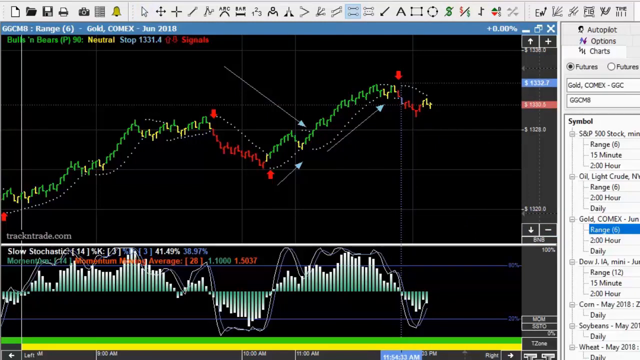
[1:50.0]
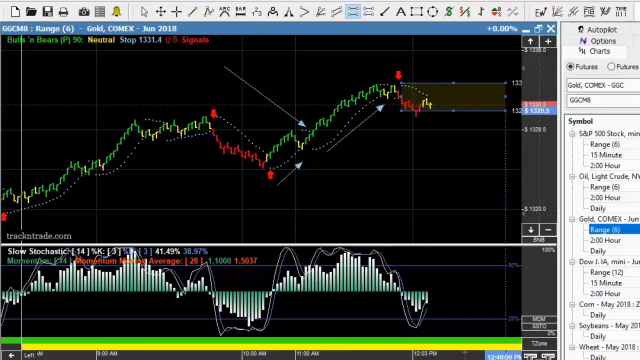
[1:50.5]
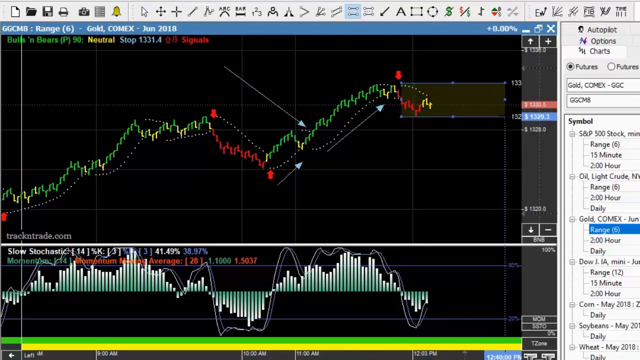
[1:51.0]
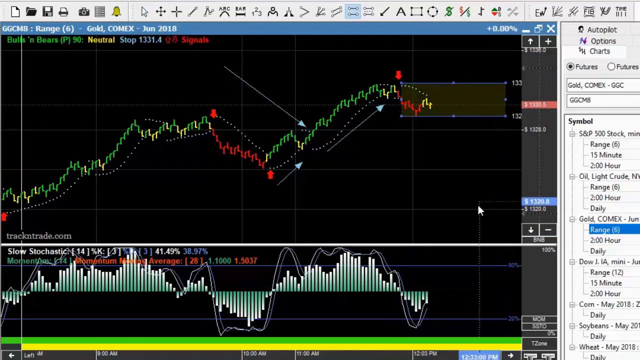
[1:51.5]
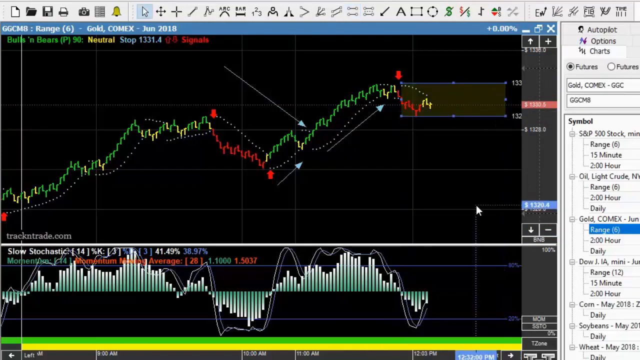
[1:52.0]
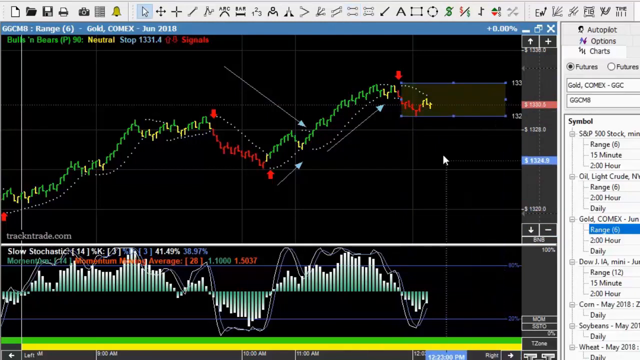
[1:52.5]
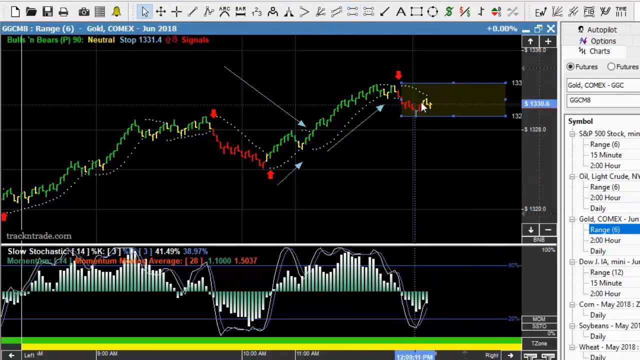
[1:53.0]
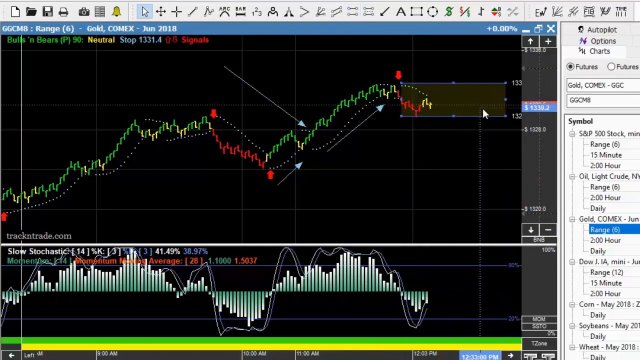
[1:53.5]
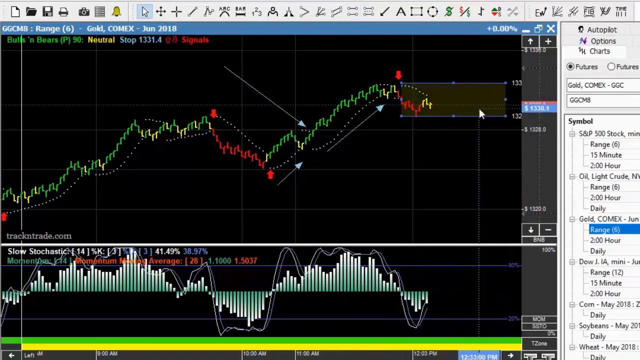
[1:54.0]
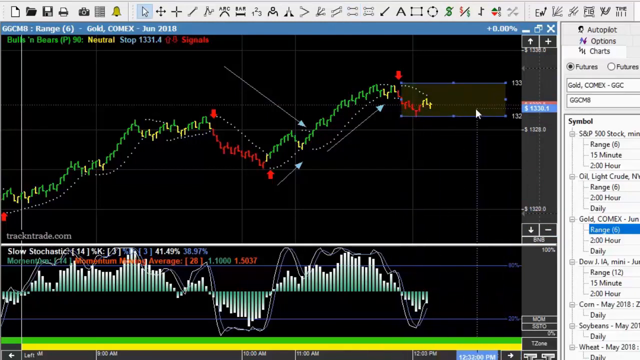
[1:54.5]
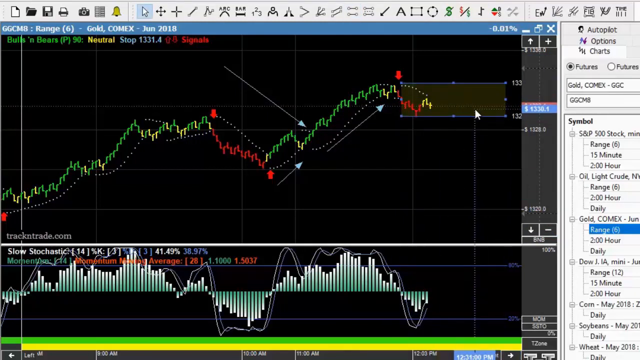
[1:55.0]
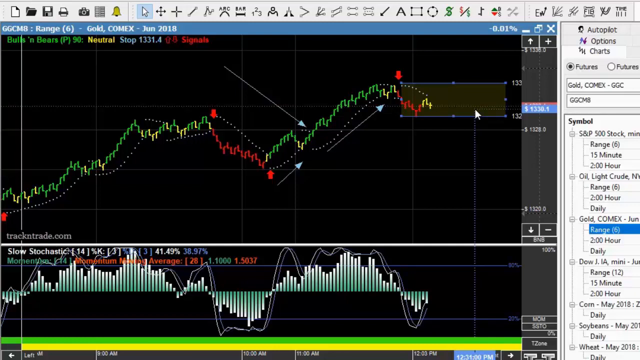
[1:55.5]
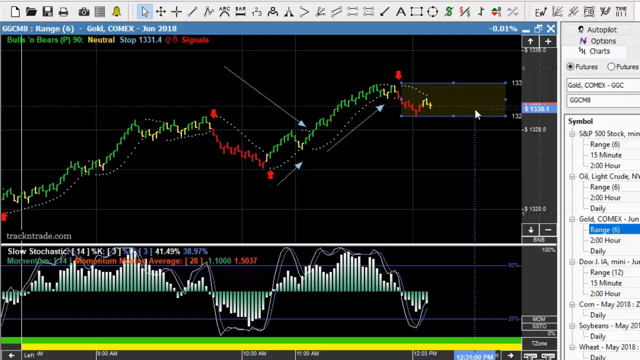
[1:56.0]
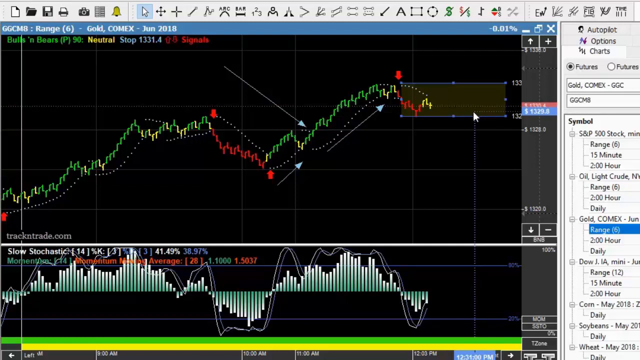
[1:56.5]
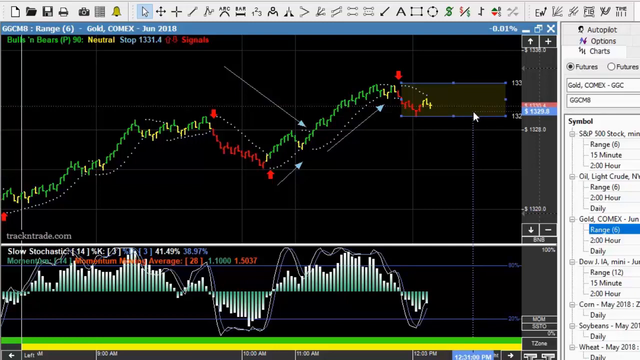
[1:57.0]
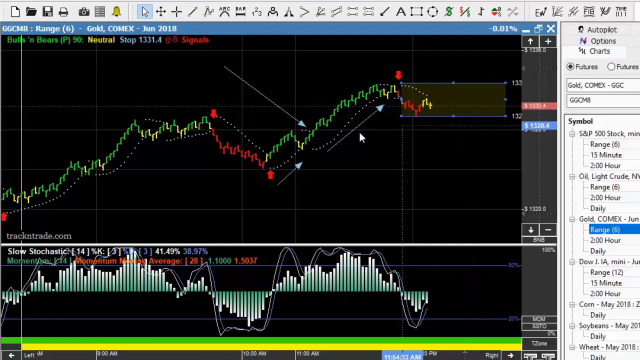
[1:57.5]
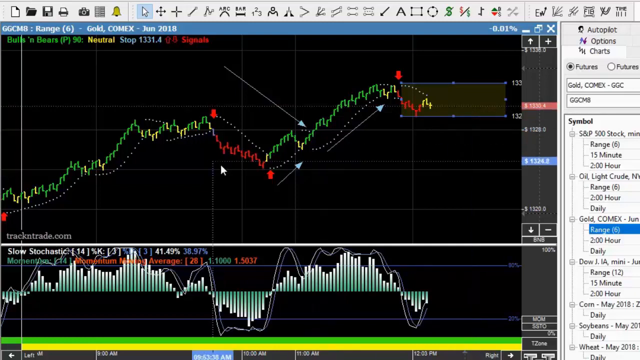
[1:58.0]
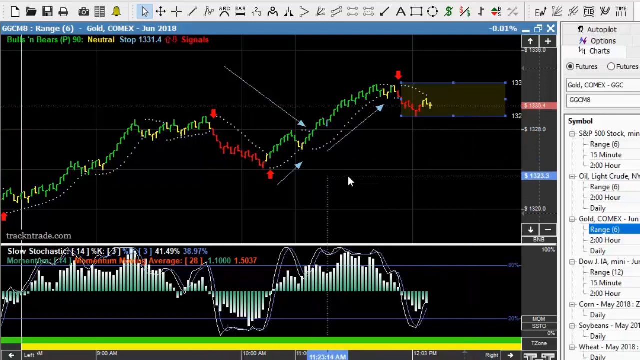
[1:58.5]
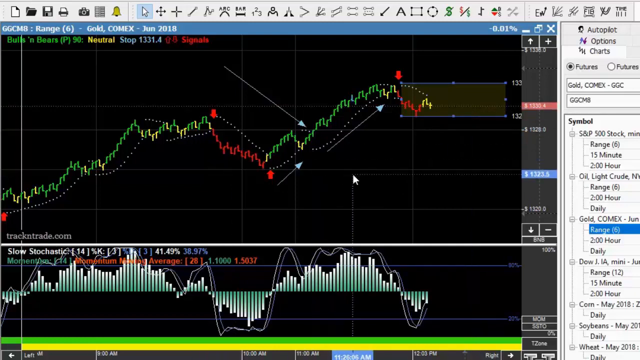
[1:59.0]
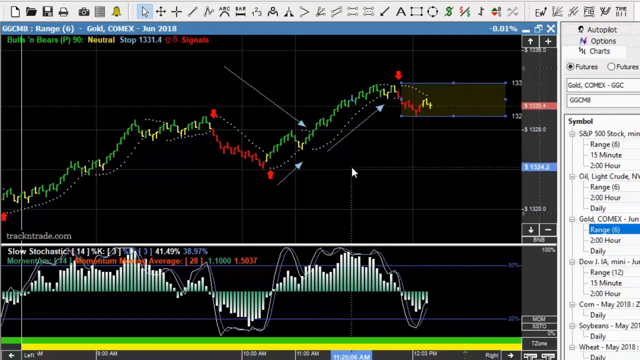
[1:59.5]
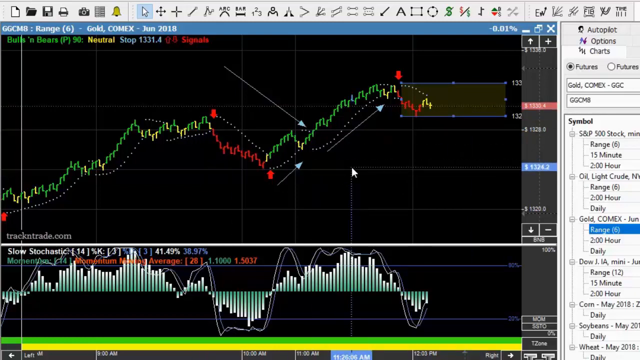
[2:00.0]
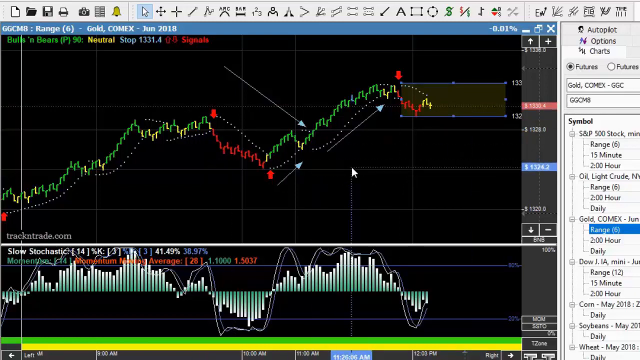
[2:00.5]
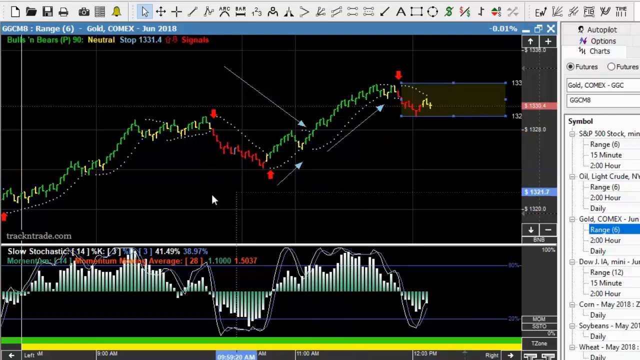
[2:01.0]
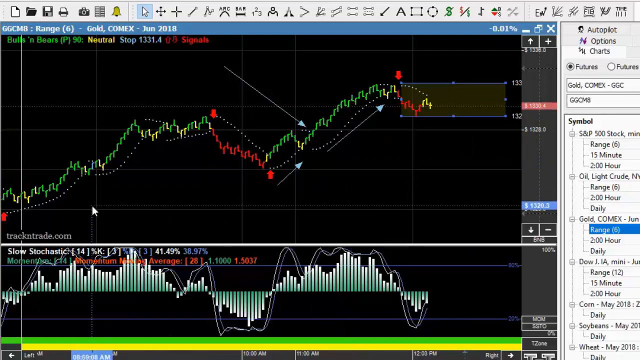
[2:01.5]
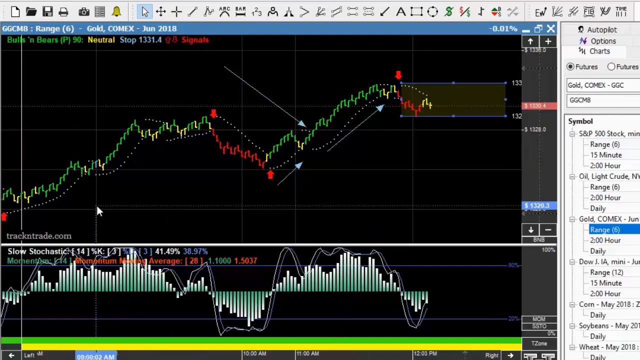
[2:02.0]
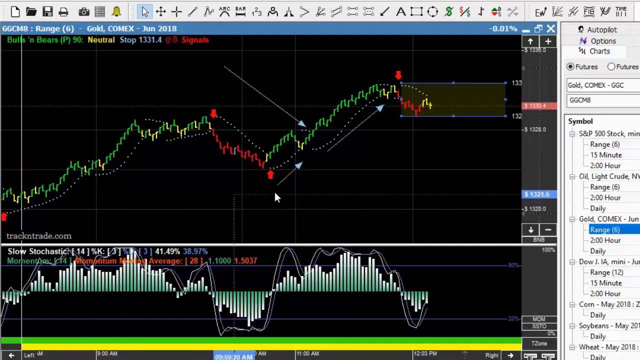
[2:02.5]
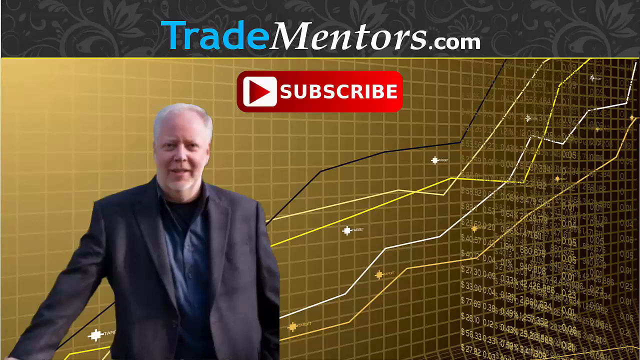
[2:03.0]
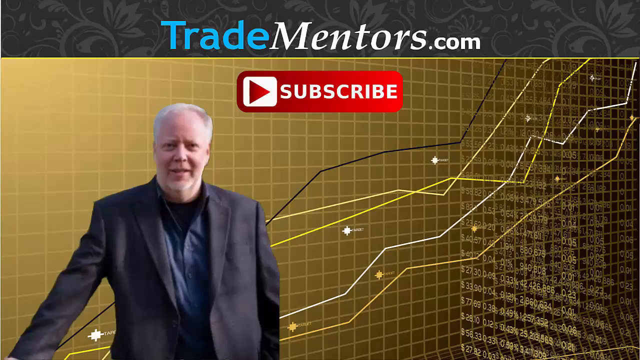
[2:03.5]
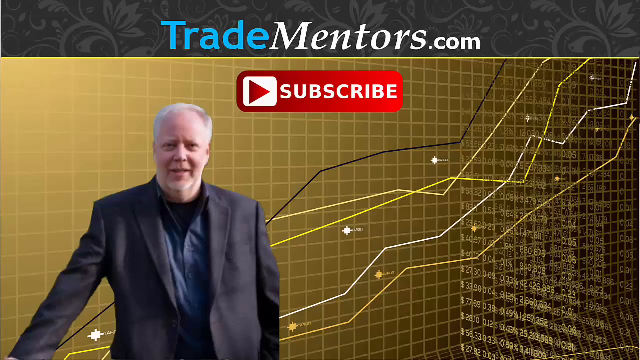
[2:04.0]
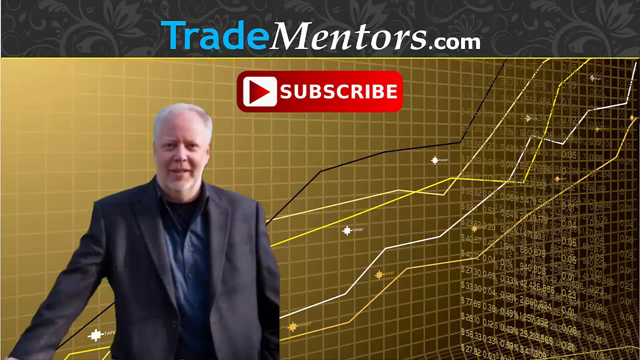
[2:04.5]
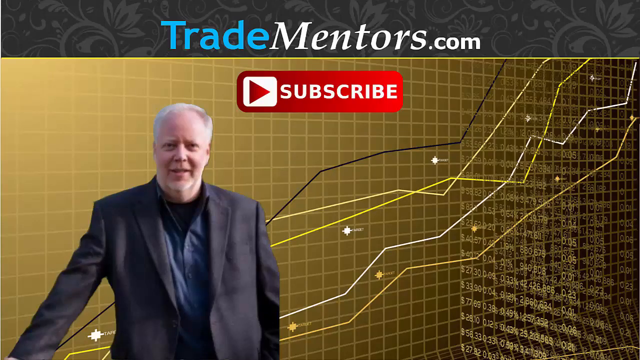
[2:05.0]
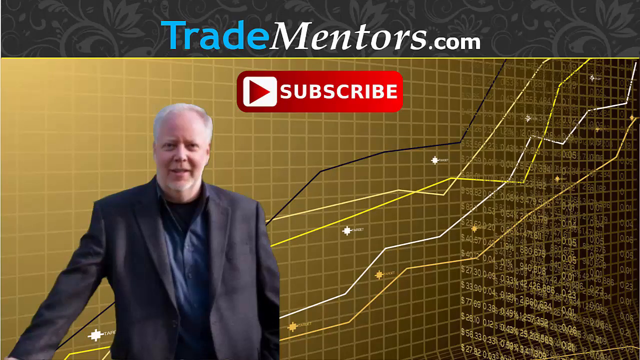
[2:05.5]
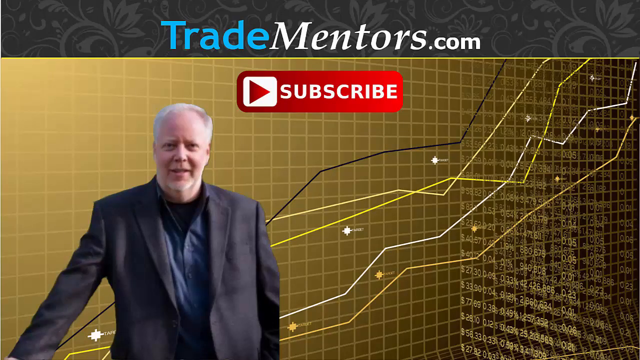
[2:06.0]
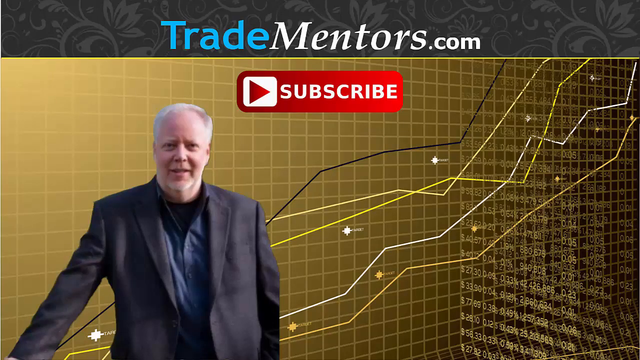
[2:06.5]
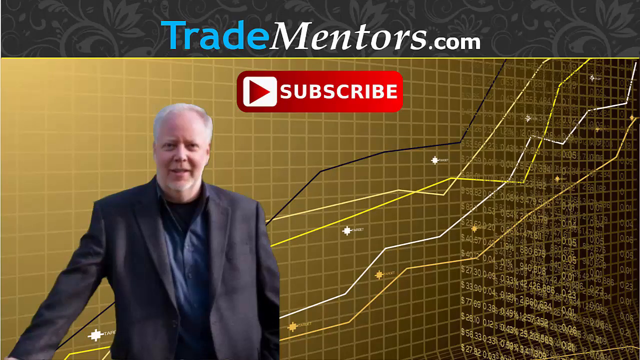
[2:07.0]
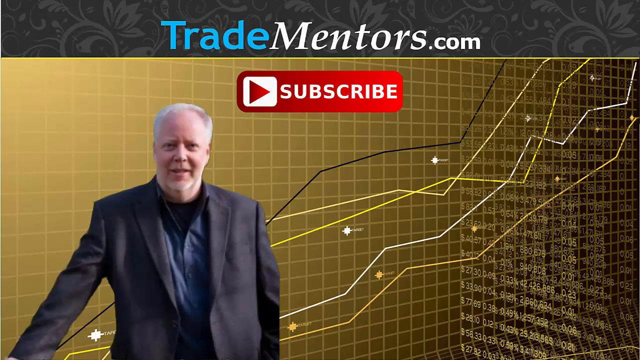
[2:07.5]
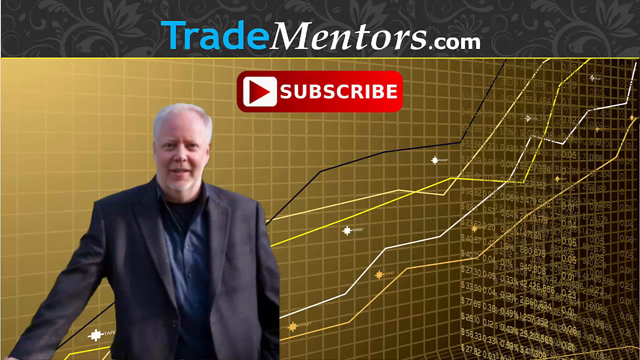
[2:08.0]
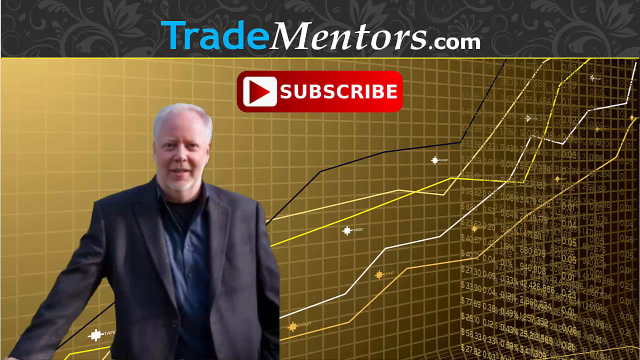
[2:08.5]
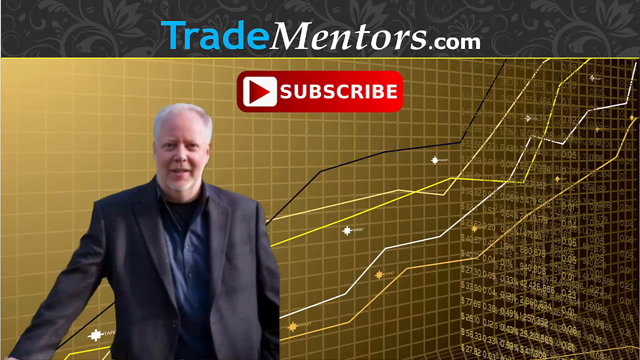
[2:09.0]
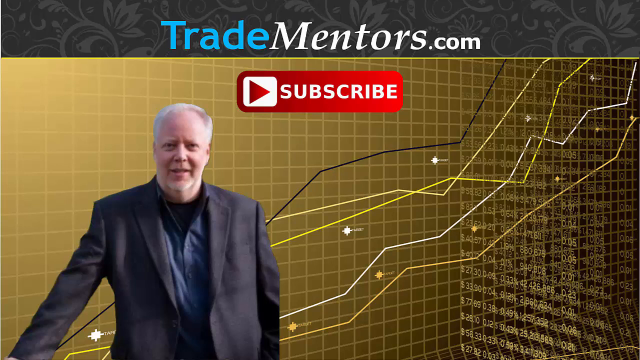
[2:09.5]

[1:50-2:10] A black screen shows a chart running from left to right. The mouse highlights parts of the screen and makes a highlighted box right at the very end of the graph, then moves below it and to the left, further left, and back to the right. An image then appears with "Tradementors.com" at the top and a YouTube subscribe button just below. Below that, slightly to the left, is an older gentleman with gray hair wearing a suit and a blue shirt. Behind him in the background are what look like stock market lines going up, and the background is golden with various lines, almost like boxes, in what appears to be a checkered pattern. The image stays on the screen.